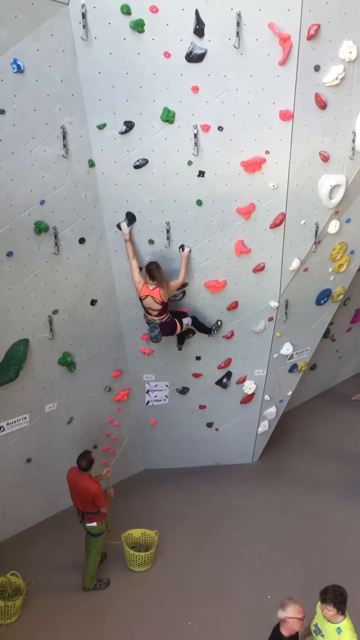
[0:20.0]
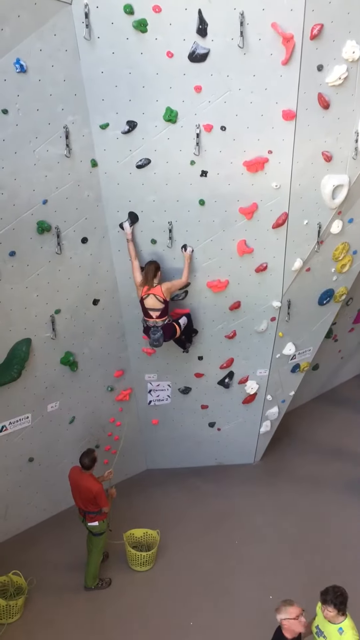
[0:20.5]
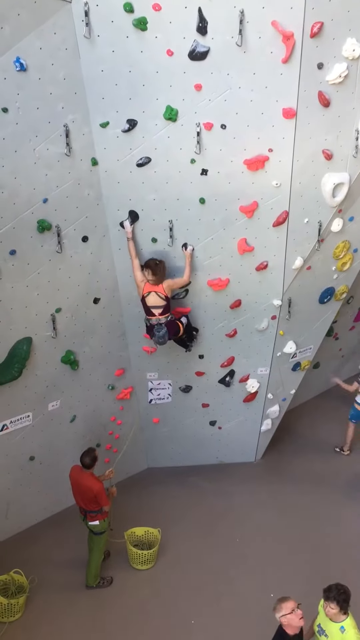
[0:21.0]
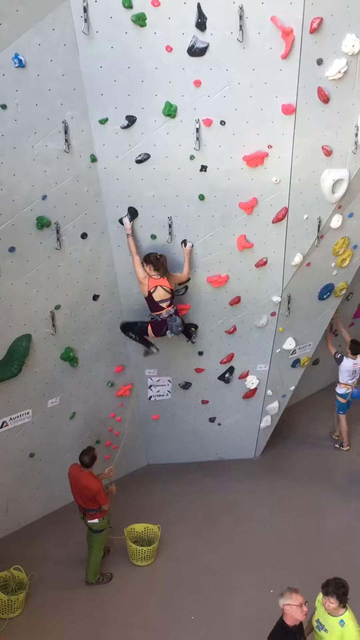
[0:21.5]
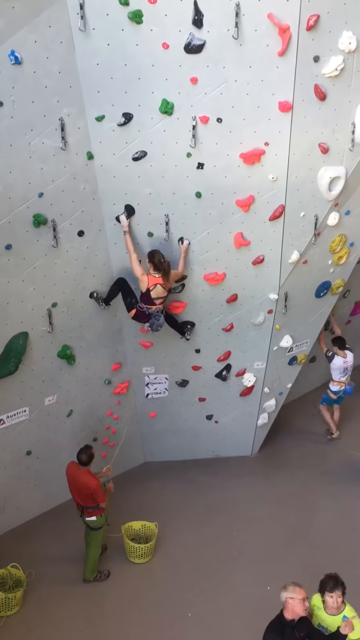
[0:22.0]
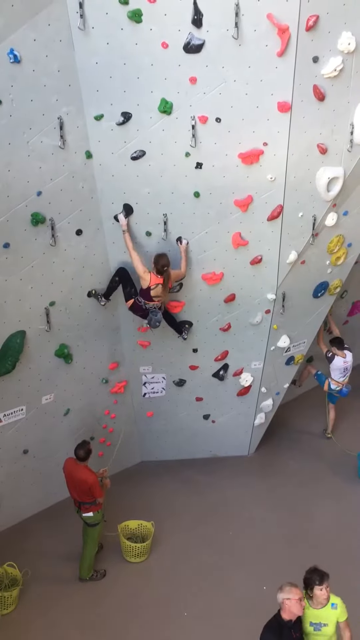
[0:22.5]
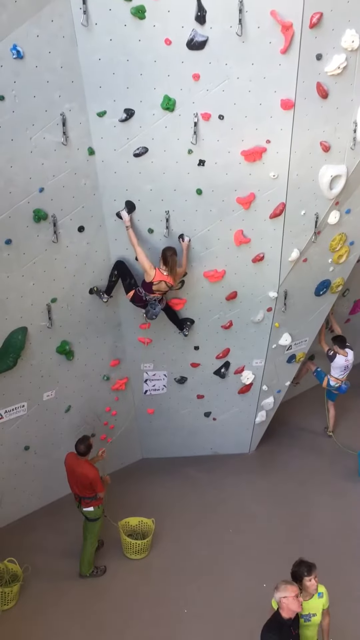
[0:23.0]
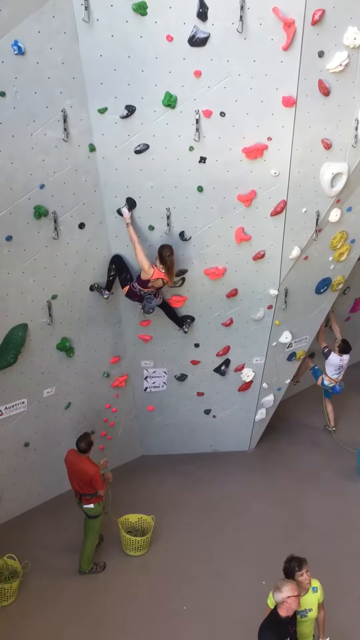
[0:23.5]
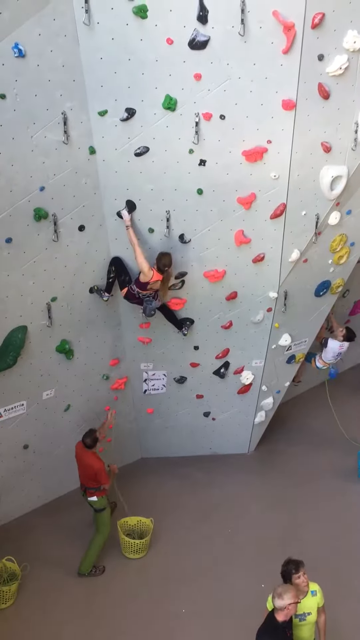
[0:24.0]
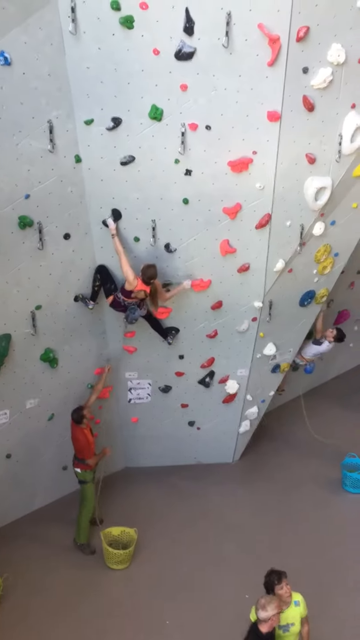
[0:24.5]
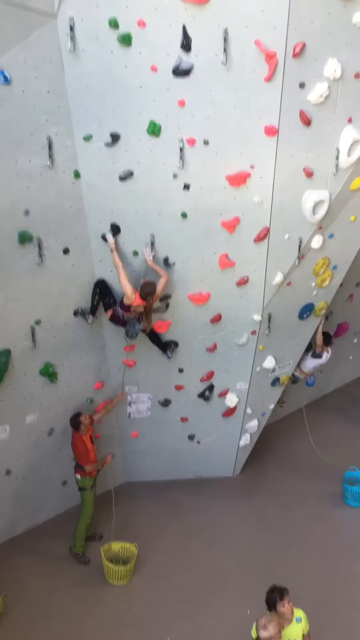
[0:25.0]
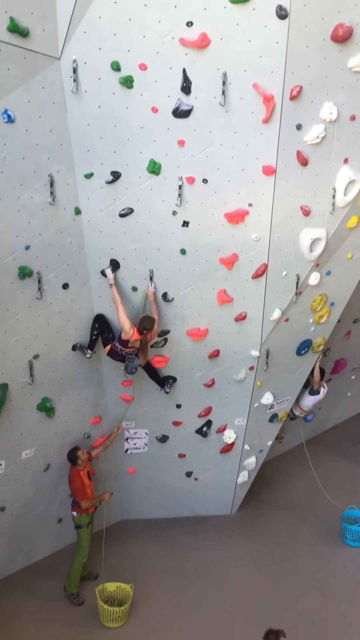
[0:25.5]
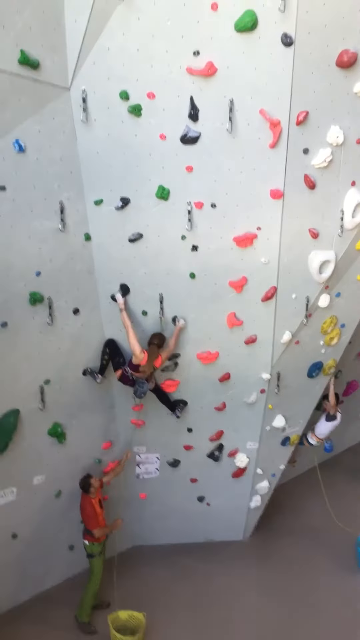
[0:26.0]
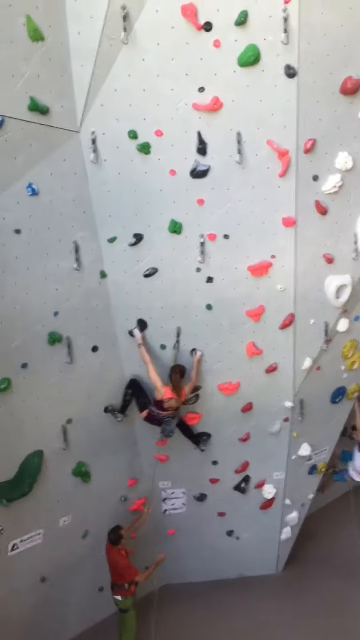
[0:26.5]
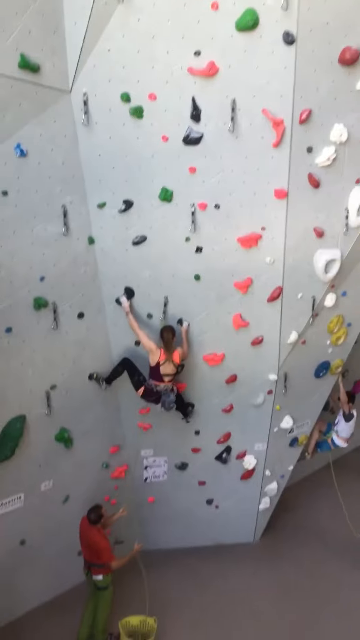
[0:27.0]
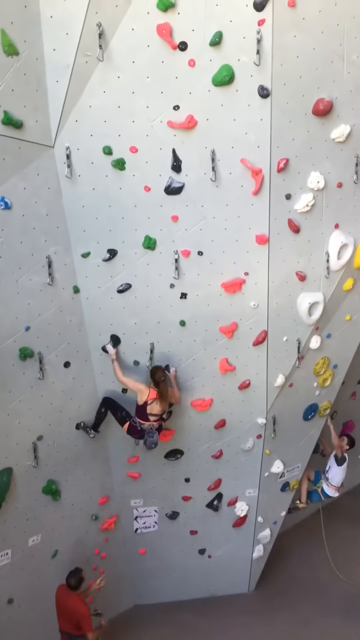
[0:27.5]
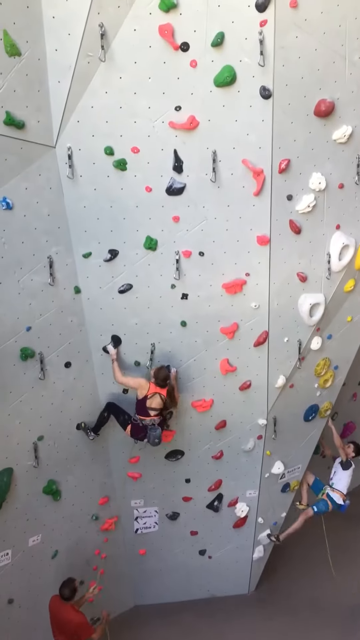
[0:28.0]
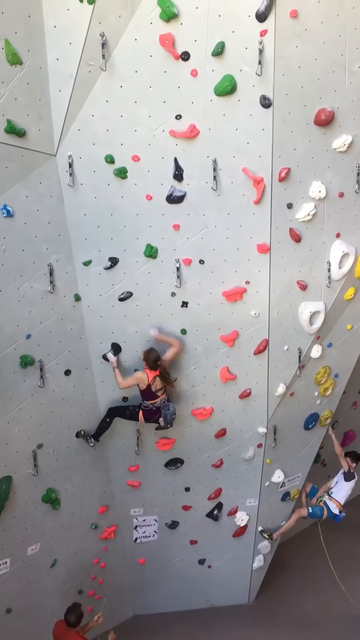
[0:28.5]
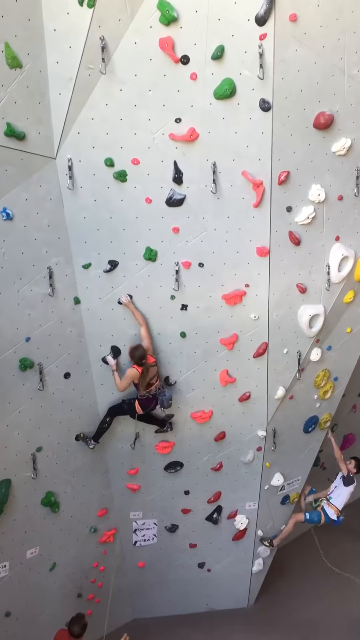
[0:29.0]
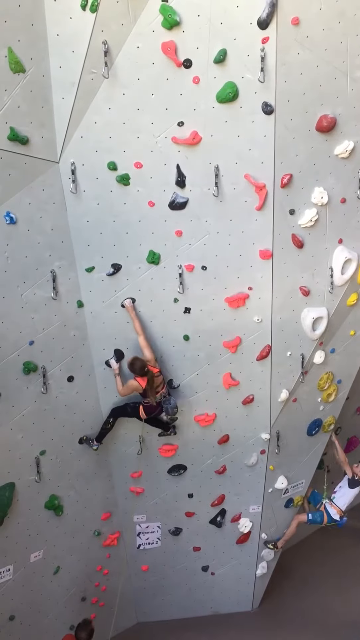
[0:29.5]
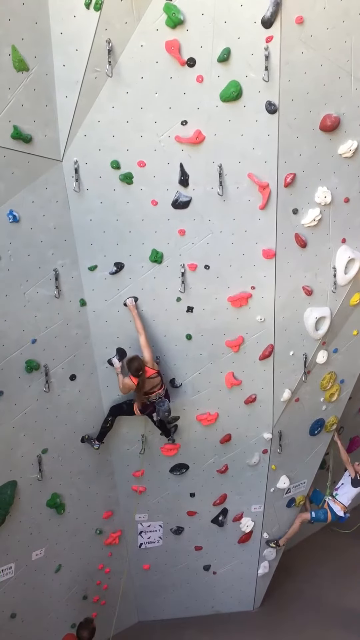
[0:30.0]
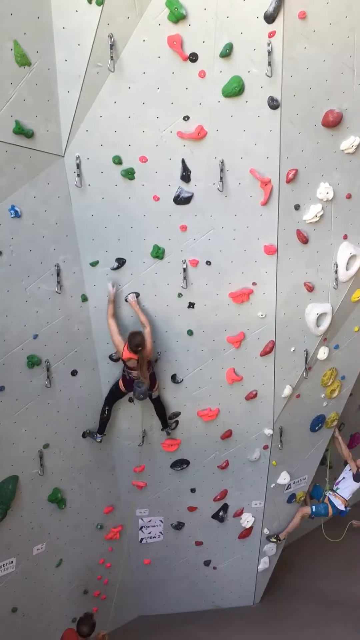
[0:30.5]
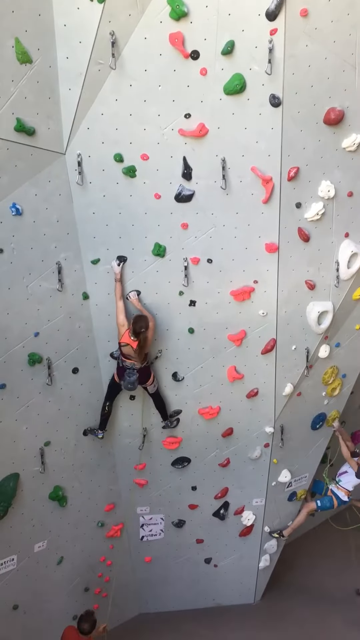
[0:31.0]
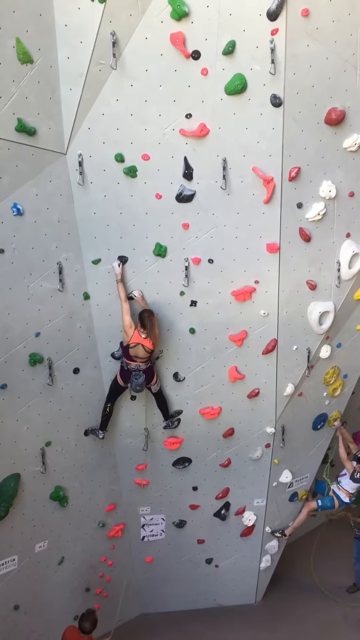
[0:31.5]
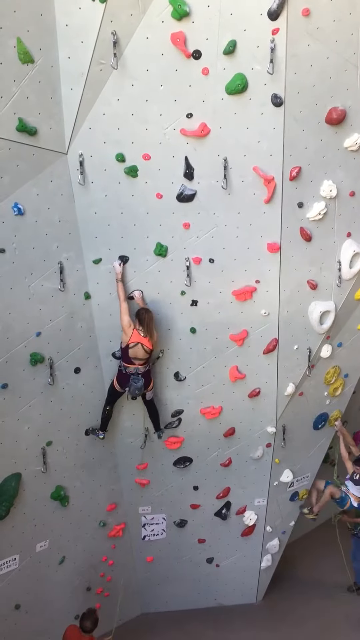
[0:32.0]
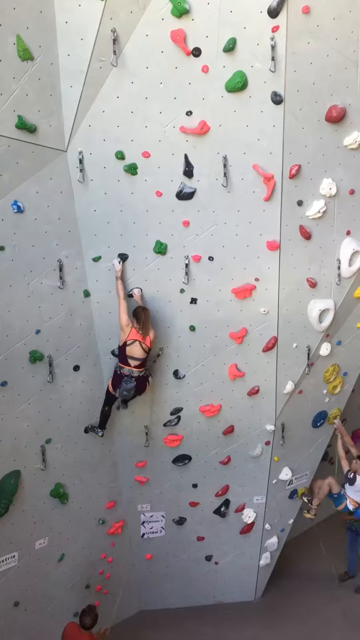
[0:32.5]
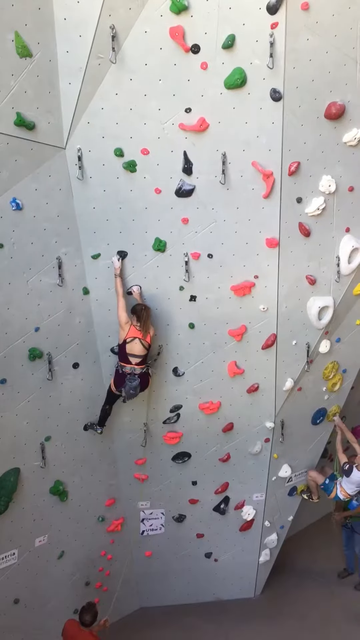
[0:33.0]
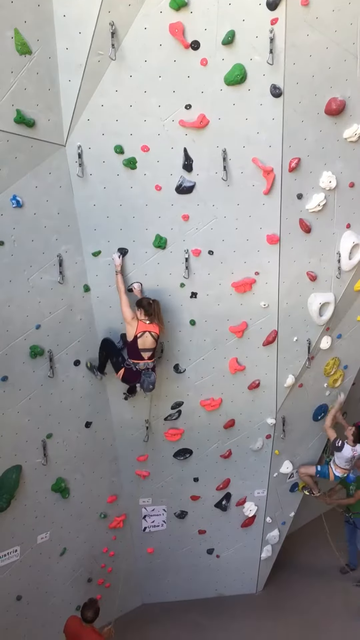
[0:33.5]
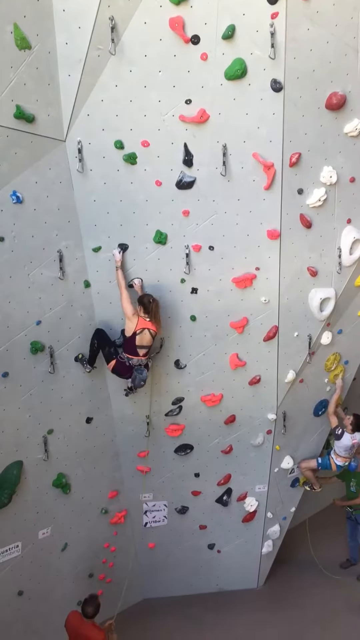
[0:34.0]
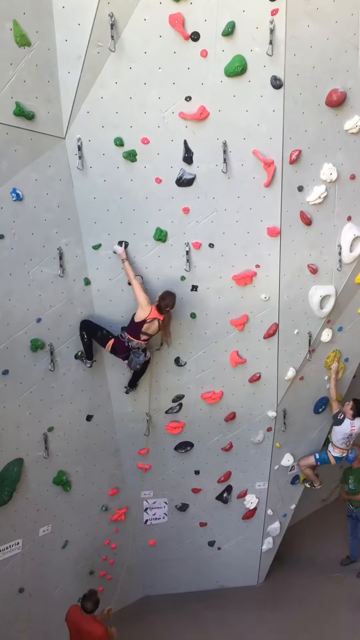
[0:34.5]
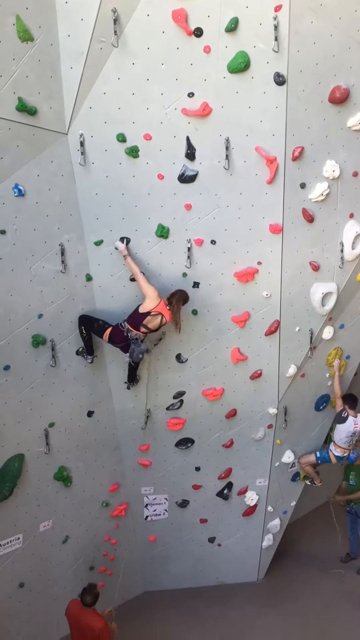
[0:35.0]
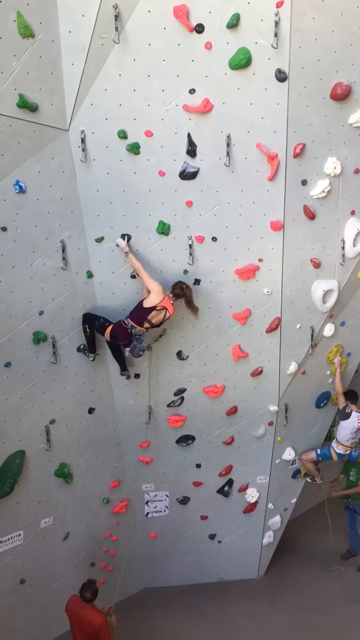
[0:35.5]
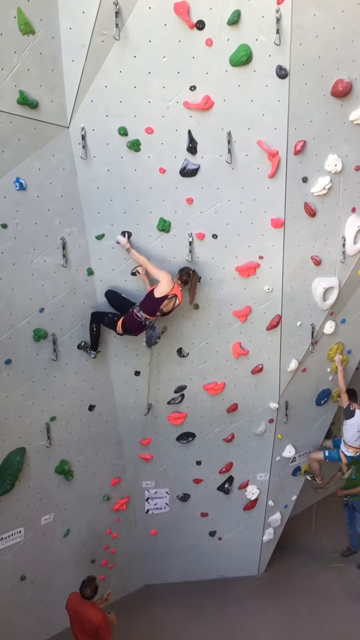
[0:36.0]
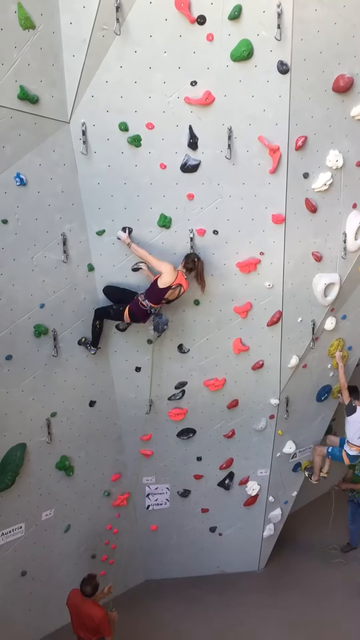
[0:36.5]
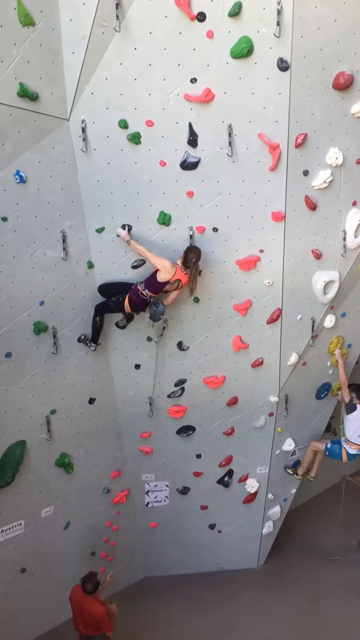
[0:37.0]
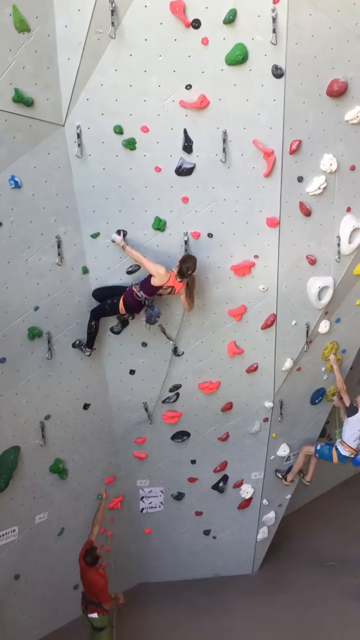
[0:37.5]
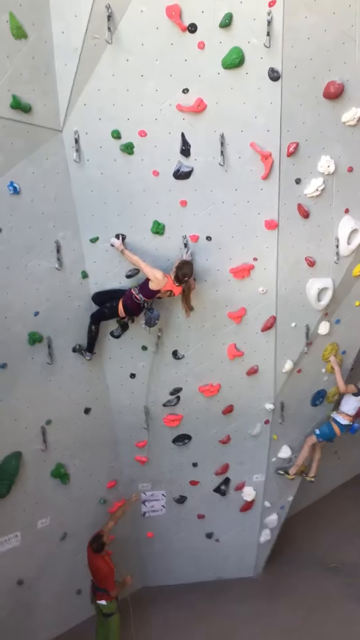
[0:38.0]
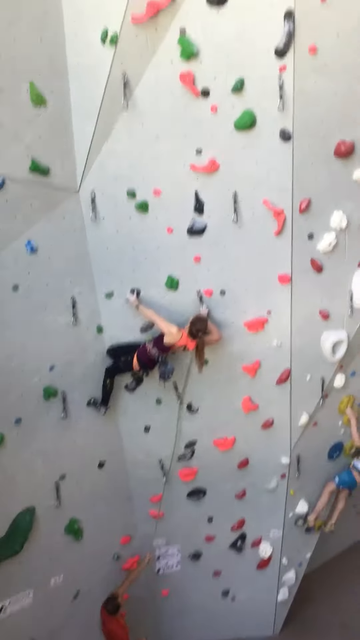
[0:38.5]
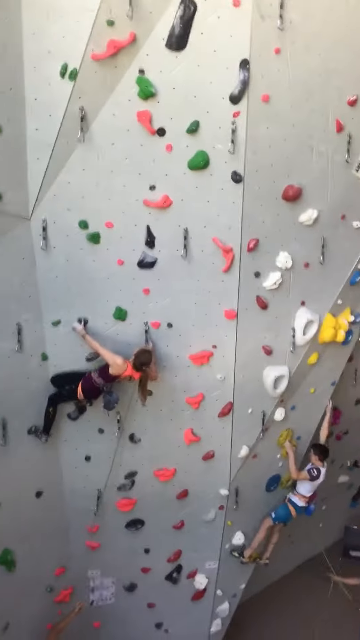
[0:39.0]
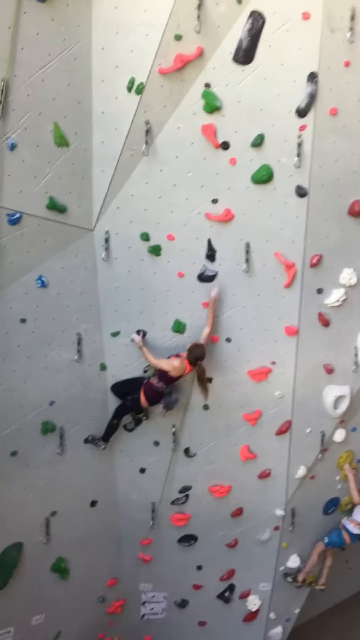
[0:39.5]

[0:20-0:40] The young woman continues climbing the wall. On the right side of the wall is a man in blue shorts and a white and gray shirt, who grabs onto the wall as the woman moves left and reaches up with her left arm for a black piece. She raises her knee to situate herself on another black piece as the man on the right begins to climb, grabbing onto something and raising his left knee. The man in the lower left reaches out beneath the young woman as she stretches her body. The camera pans upward as she pulls herself up, and the man in the white shirt moves left as he climbs. The woman grabs another black piece, brings her legs together, and continues pulling herself up slowly, holding the black piece with her body angled diagonally to the right, while the young man struggles on a yellow piece but pulls himself up. The camera jerks up as the woman reaches with her right arm toward a black piece.